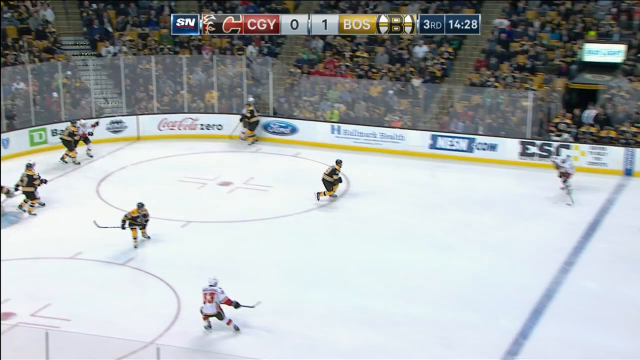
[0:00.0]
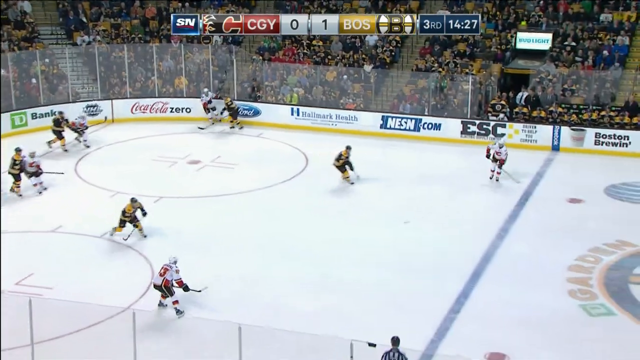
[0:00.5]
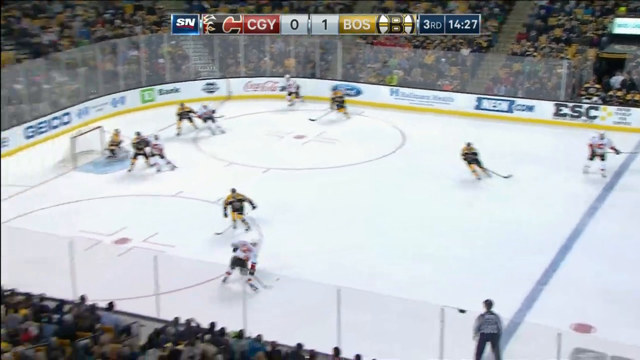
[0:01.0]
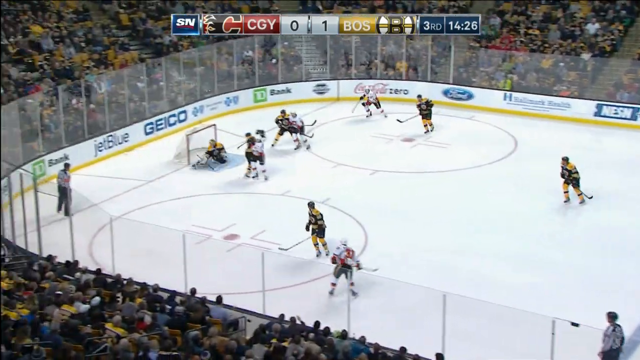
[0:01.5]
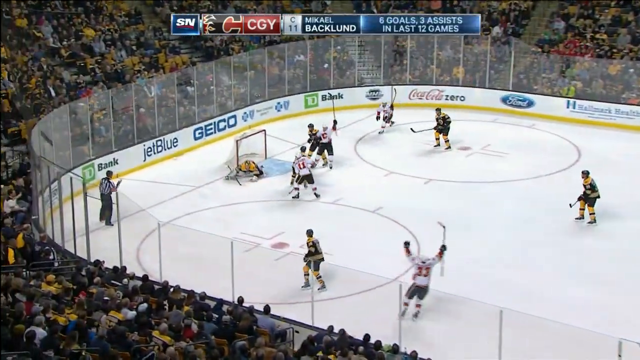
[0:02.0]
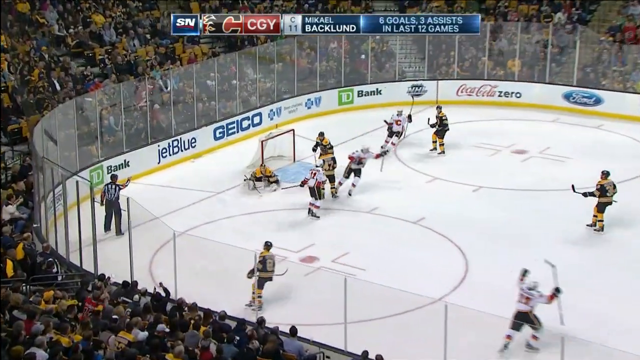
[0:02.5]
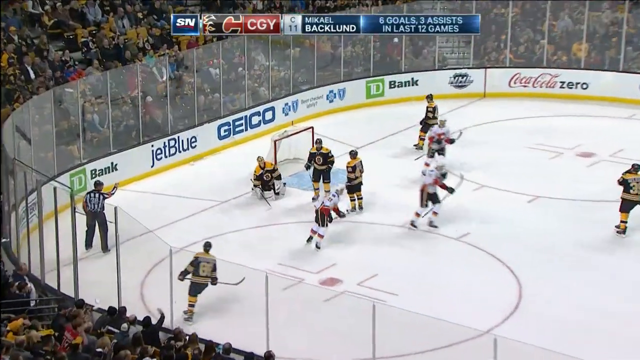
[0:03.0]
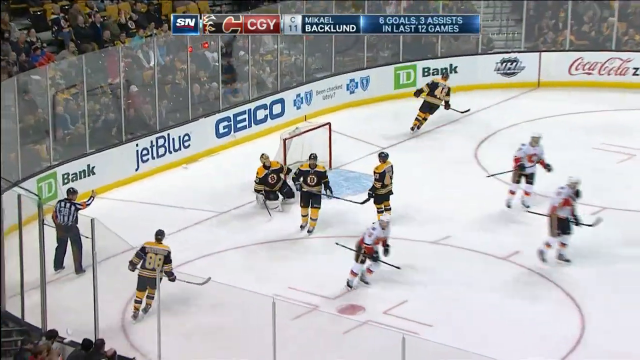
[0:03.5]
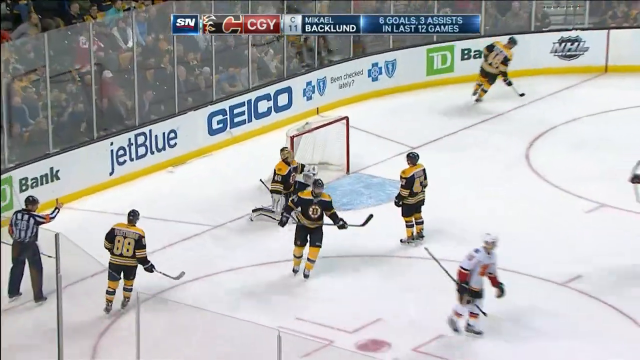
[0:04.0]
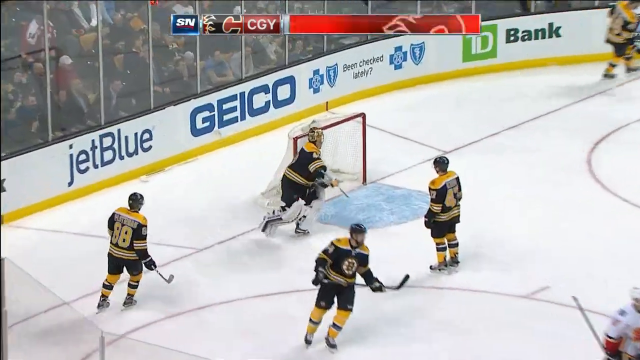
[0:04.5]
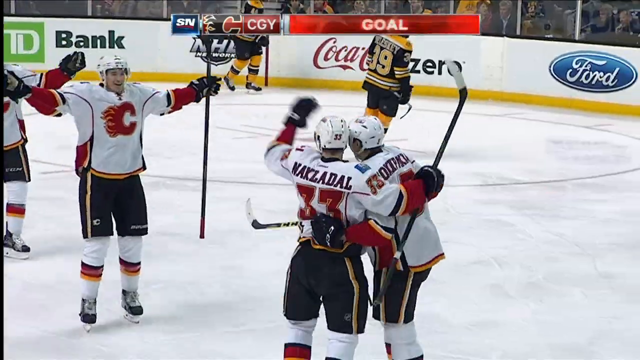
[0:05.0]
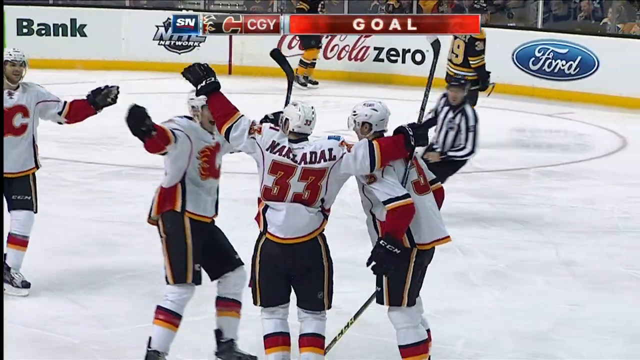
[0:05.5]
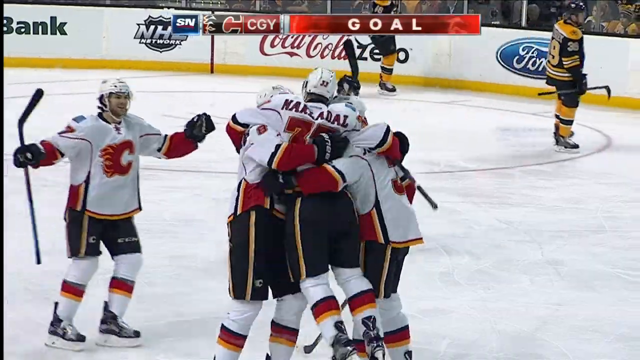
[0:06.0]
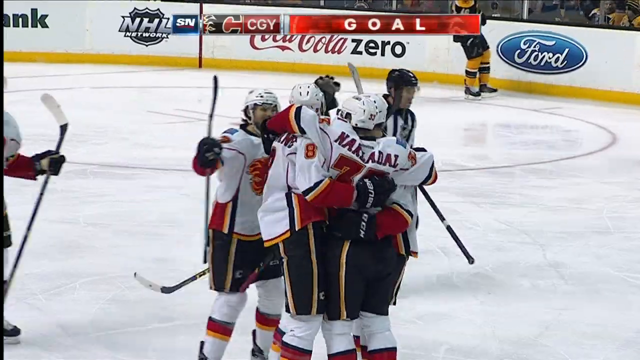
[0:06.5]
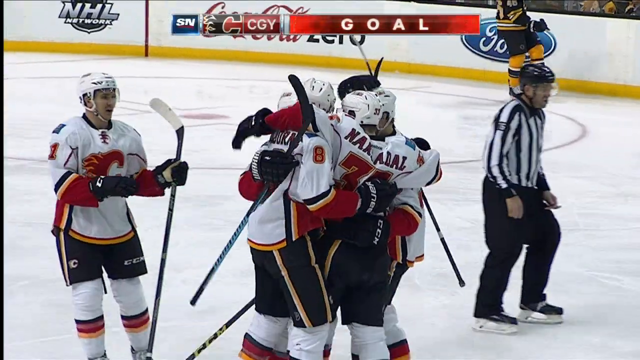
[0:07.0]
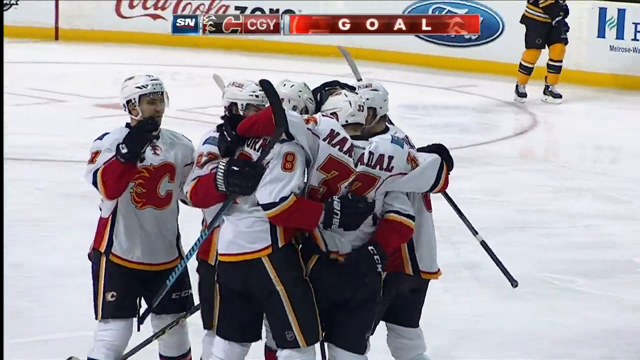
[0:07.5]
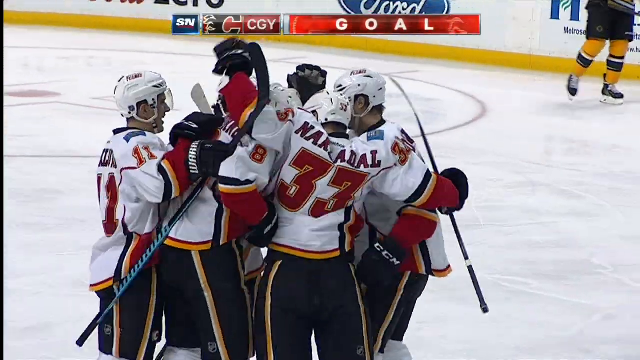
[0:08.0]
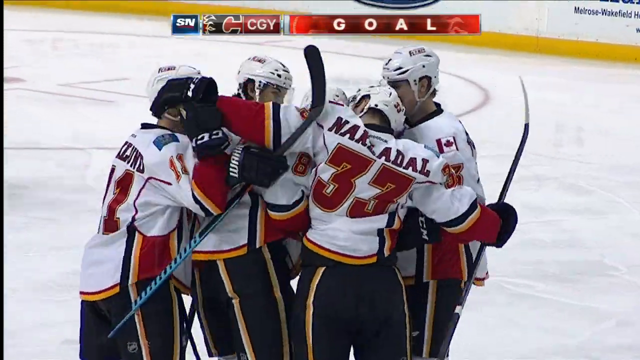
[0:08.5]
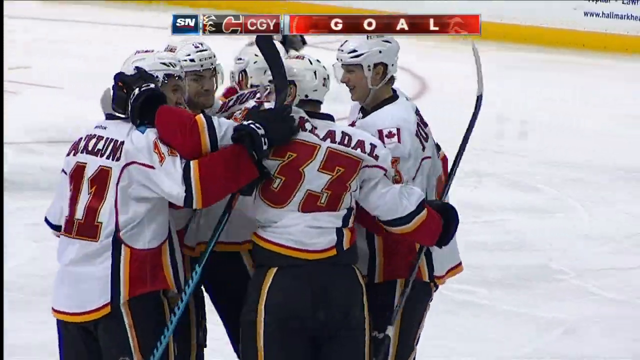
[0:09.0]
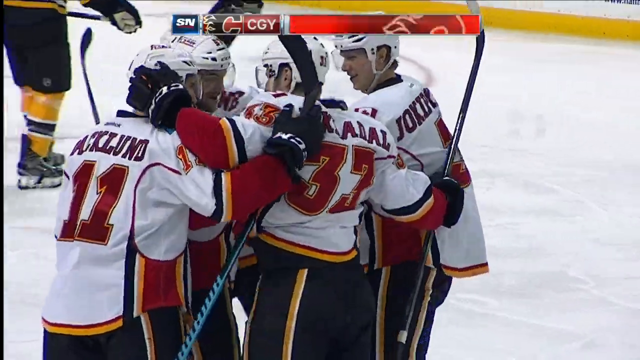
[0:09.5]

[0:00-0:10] An NHL (National Hockey League) game between Calgary and Boston is shown on the ice. The home team, Boston, has one and Calgary has zero. It is the third period, with 14 minutes and 28 seconds showing, and Calgary has just scored a goal.